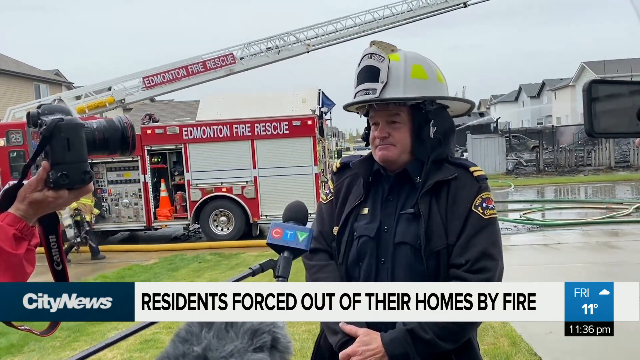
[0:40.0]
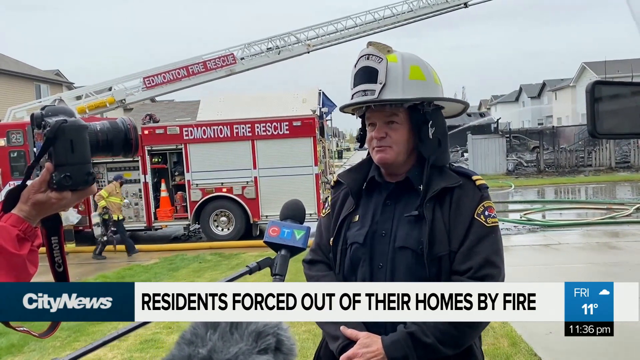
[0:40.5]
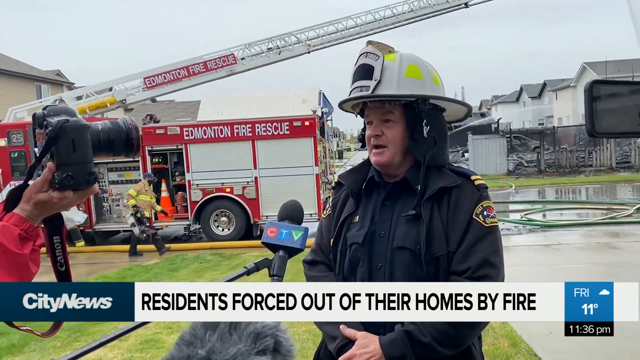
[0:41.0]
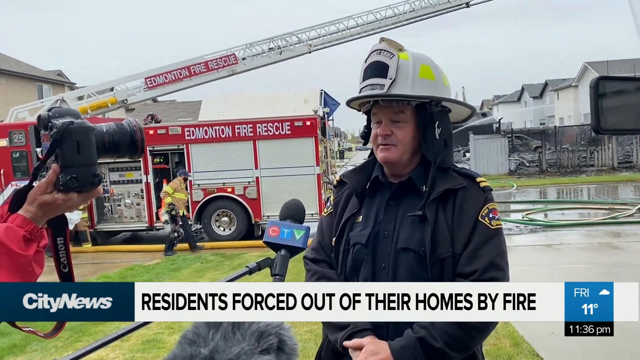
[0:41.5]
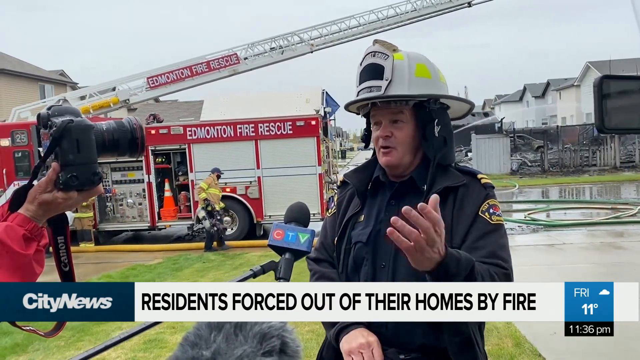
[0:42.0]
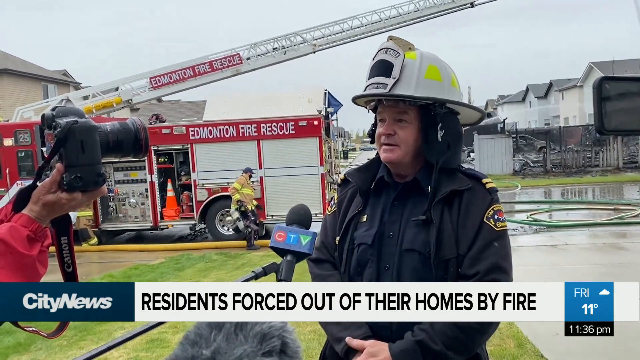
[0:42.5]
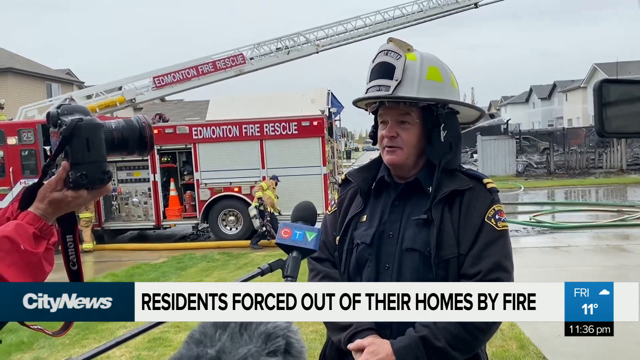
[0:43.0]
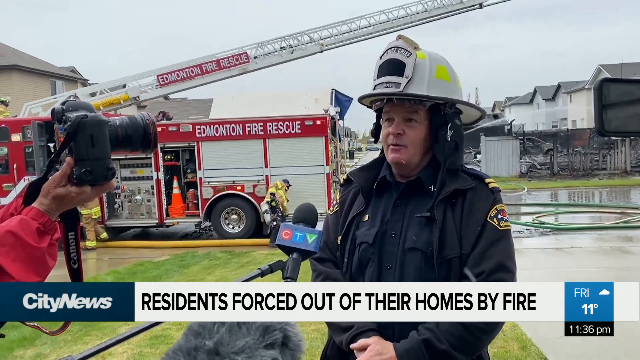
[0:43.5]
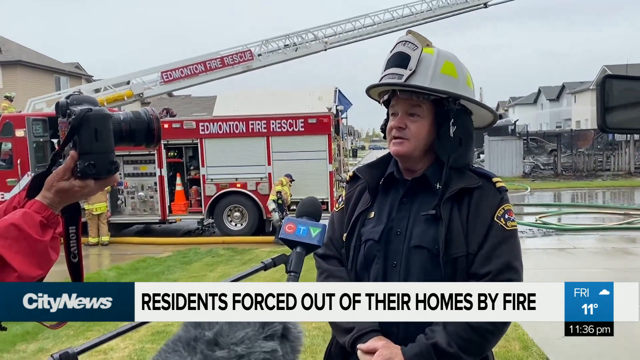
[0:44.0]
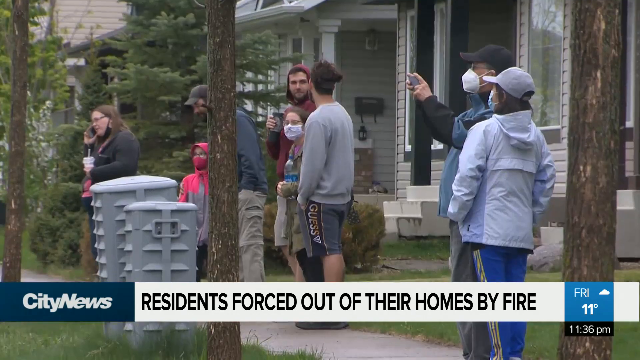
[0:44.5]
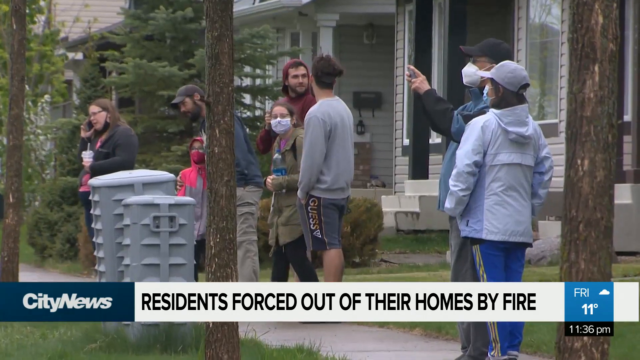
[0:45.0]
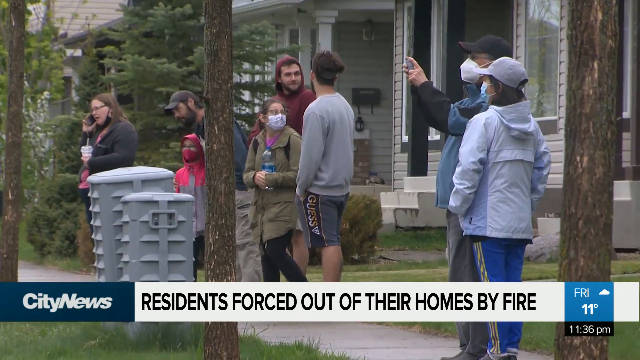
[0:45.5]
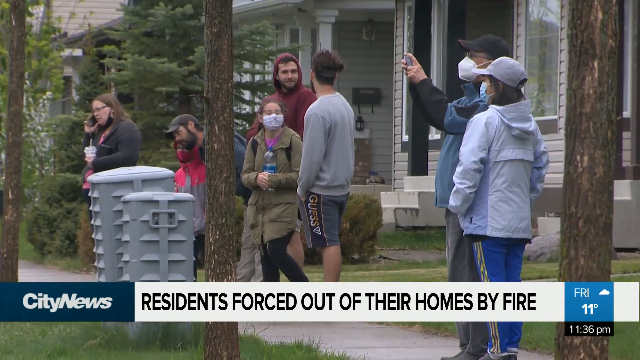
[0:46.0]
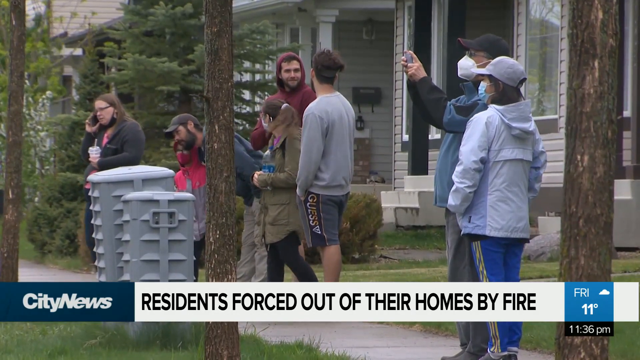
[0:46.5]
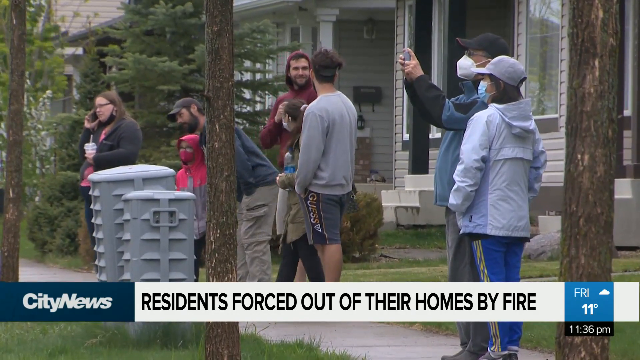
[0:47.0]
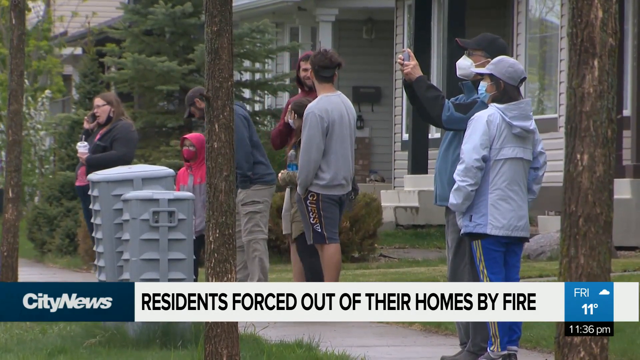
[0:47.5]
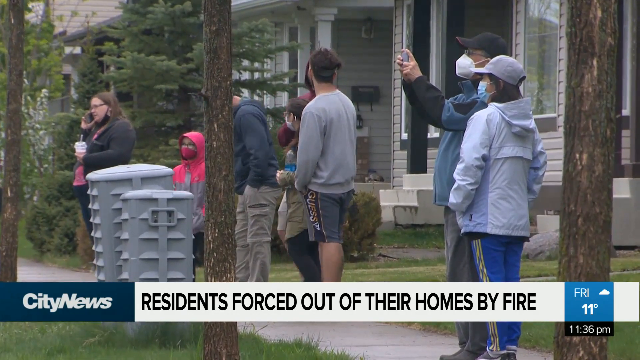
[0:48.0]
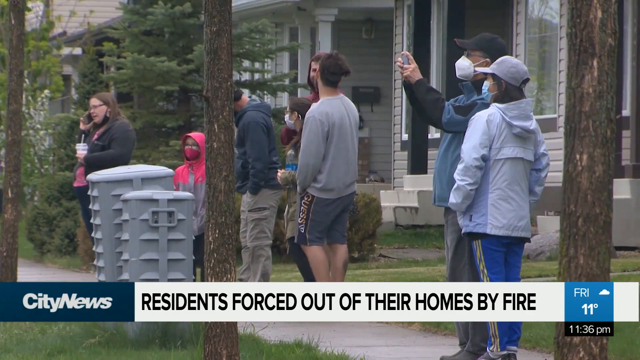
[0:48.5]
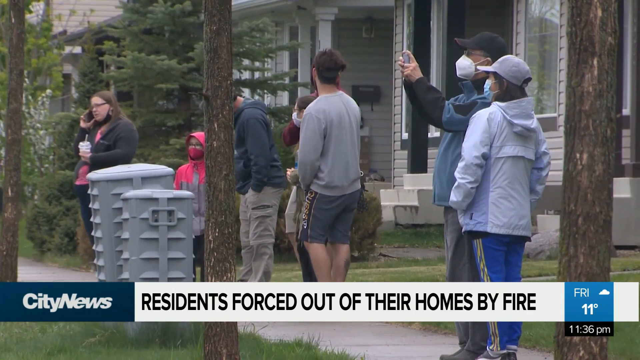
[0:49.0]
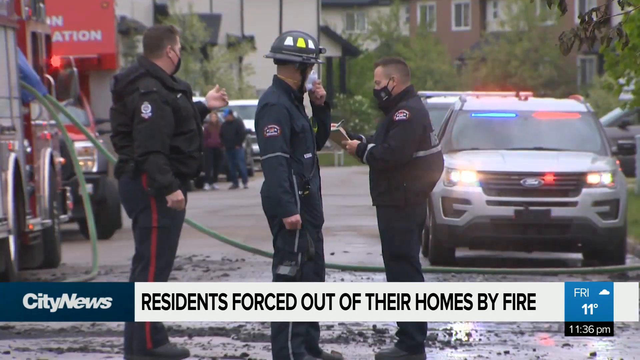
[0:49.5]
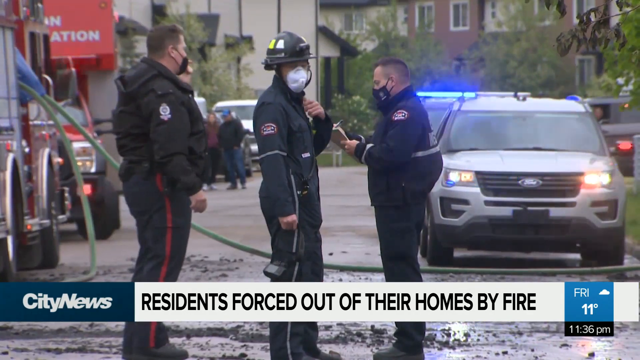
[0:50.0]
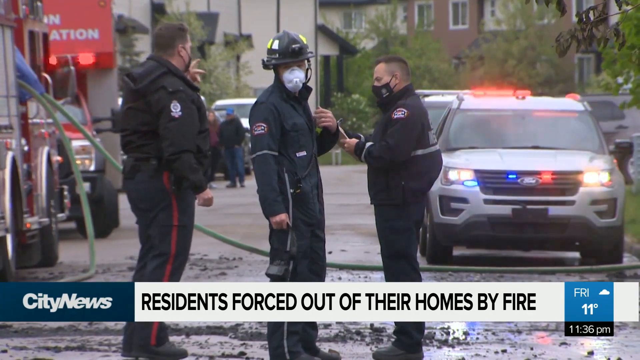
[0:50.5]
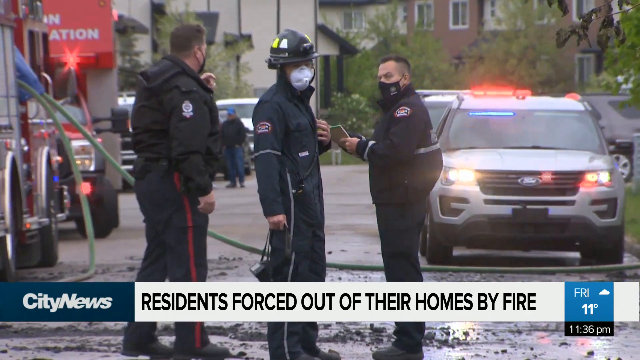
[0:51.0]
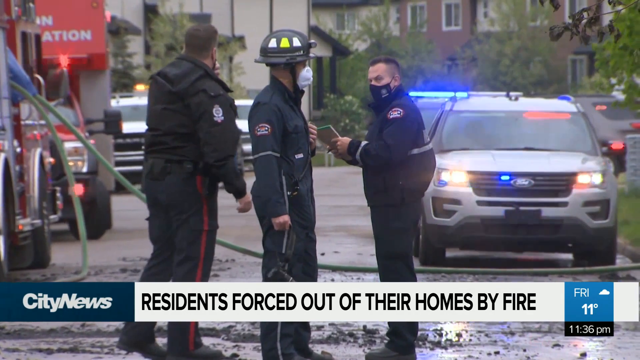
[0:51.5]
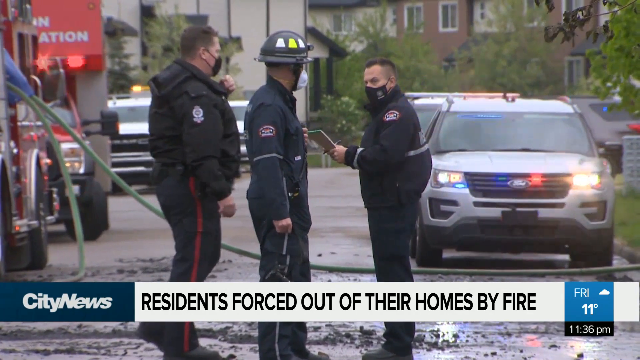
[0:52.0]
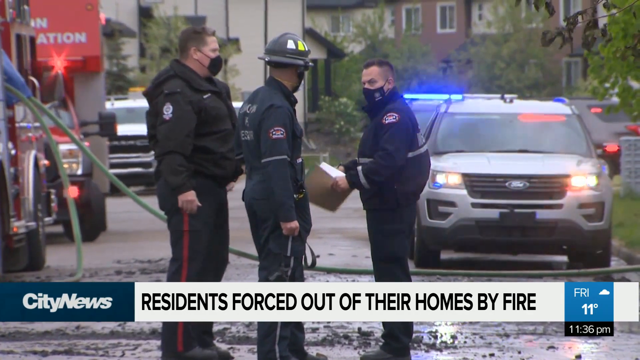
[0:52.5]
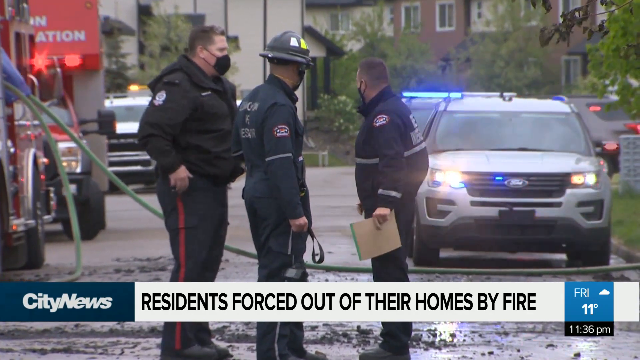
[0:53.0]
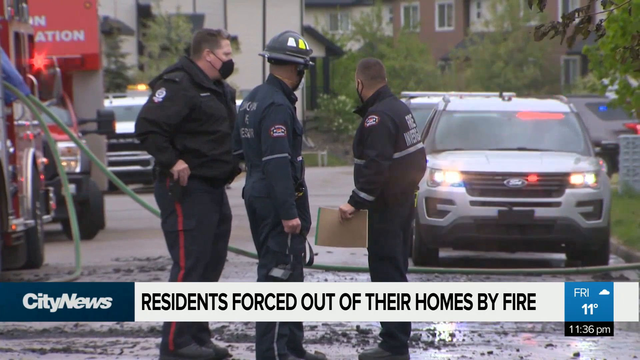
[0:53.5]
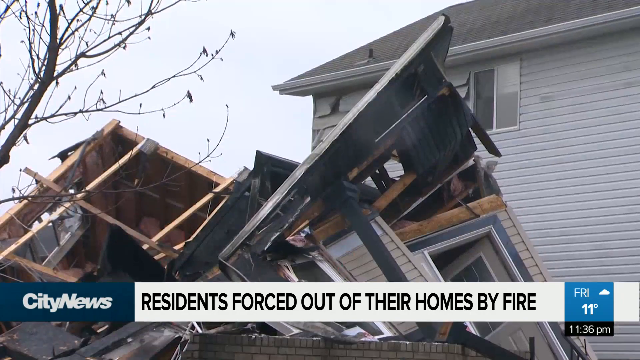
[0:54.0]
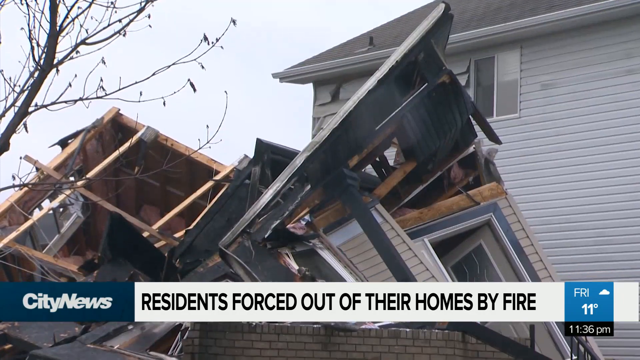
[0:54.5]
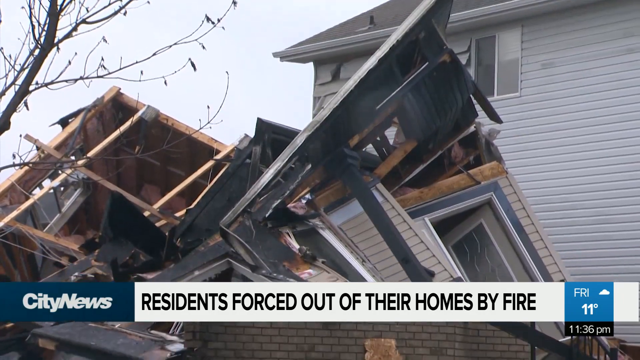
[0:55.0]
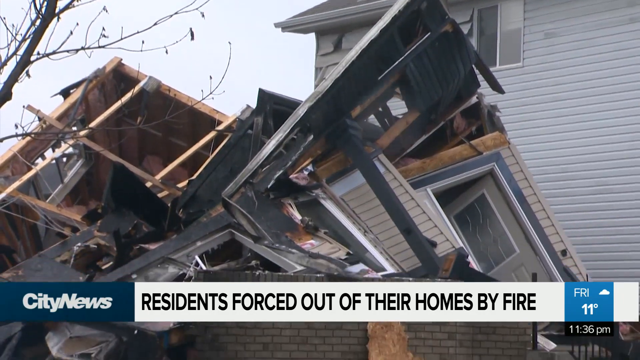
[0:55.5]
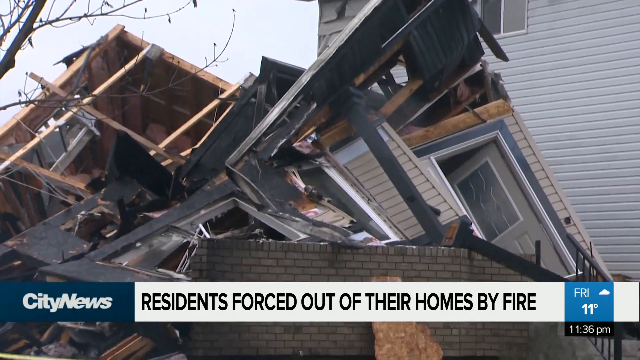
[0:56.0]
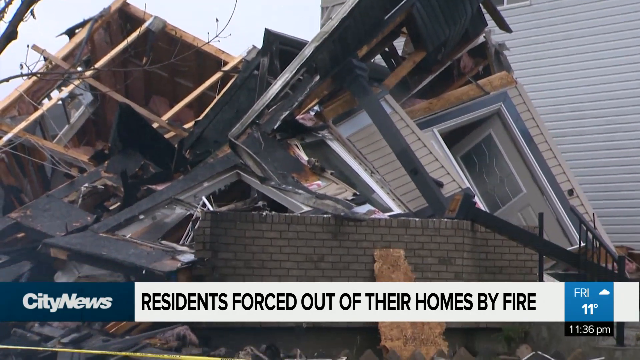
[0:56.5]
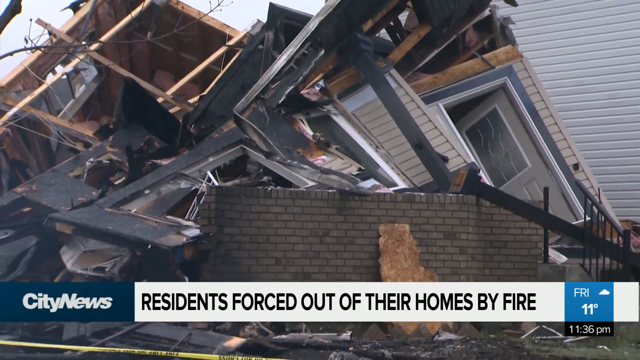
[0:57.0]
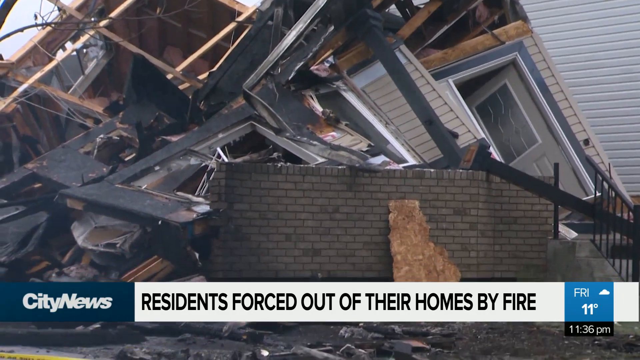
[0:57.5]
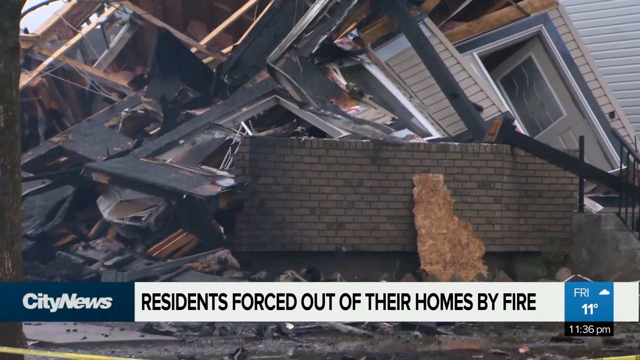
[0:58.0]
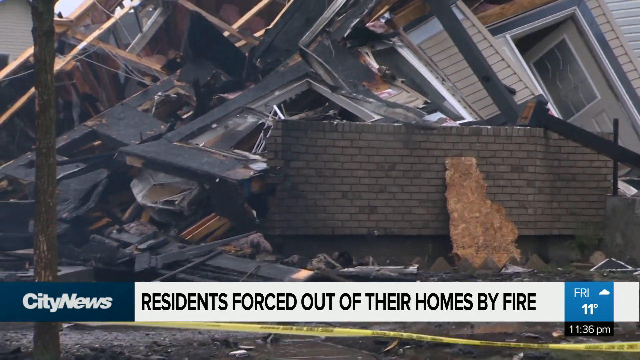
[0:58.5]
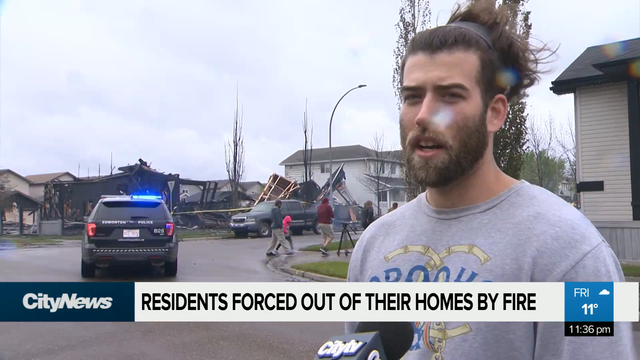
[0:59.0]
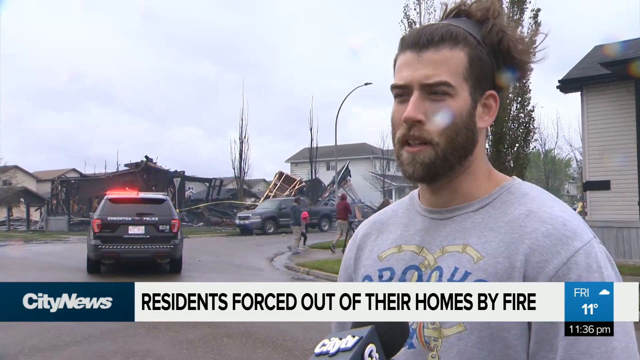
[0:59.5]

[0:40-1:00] A white man wears a large white hard hat with reflective yellow circles on it, a black shirt and a black jacket. On the jacket's right arm is some type of yellow fire department patch. Behind him is a large red fire truck with a long white extension ladder attached to the top; the truck has lots of different gauges and elements for connecting water hoses. Orange safety cones are on the side of the truck. Behind the man, three fire hoses are laying everywhere and the ground is wet. Various firefighters in beige uniforms and white hard hats walk around the fire truck. There are lots of police trucks and police cars with flashing lights, most of them white. The large house, which has fallen and collapsed onto itself, is still burning, with flames and white smoke coming out of it.